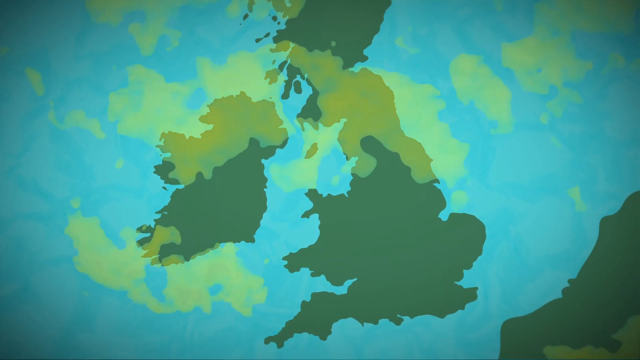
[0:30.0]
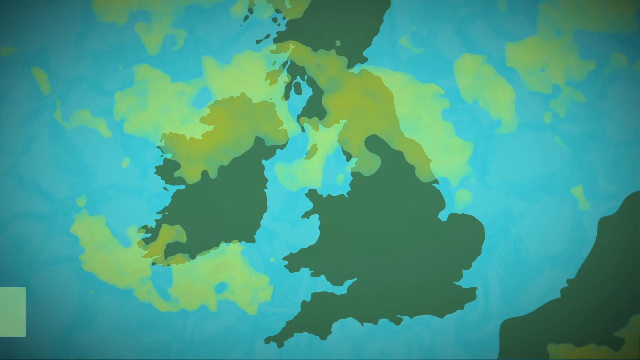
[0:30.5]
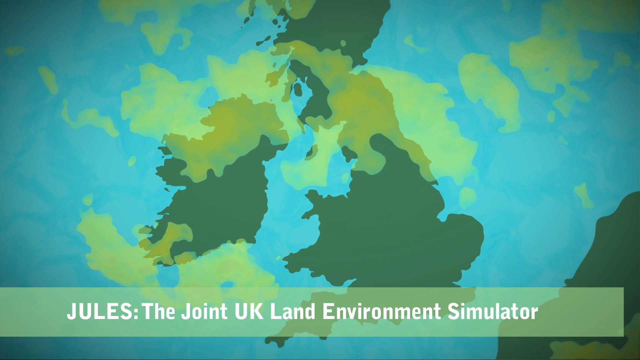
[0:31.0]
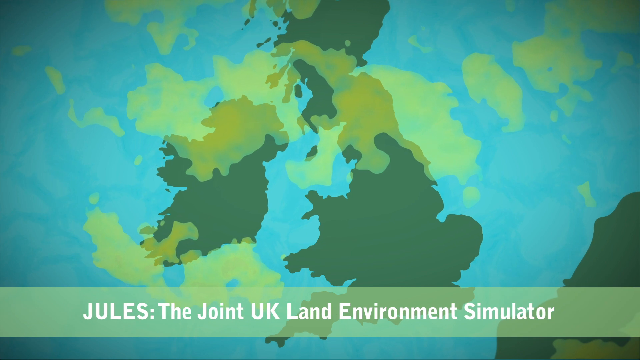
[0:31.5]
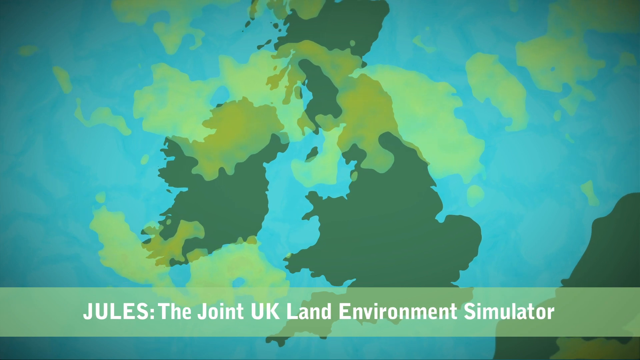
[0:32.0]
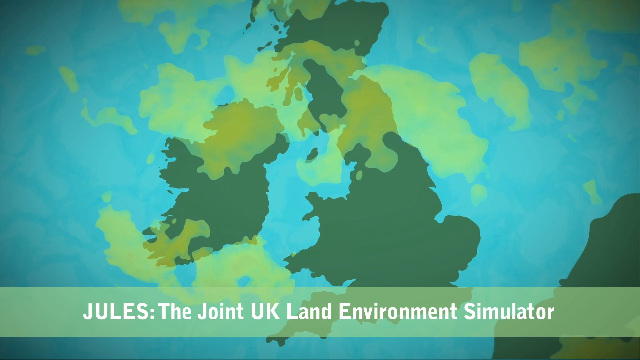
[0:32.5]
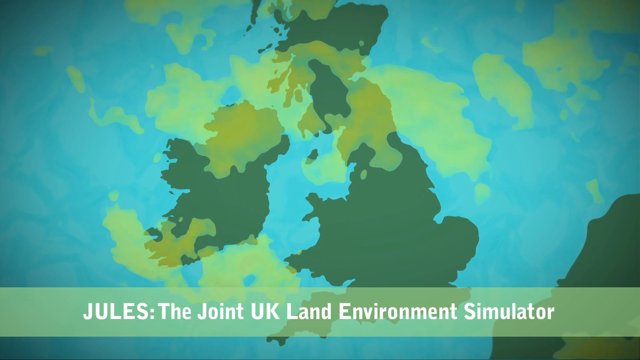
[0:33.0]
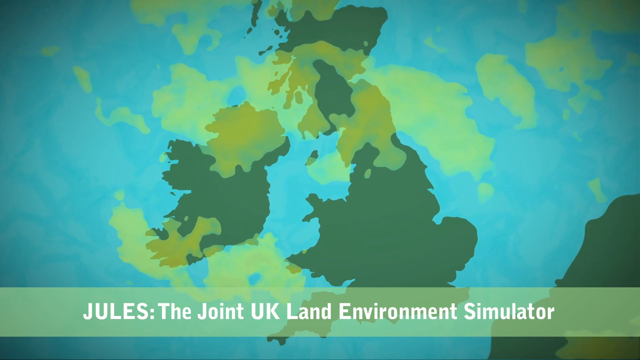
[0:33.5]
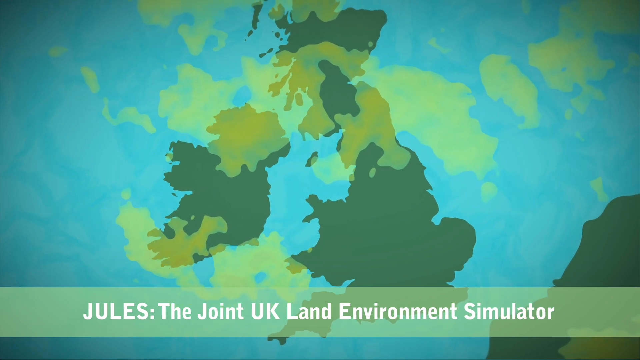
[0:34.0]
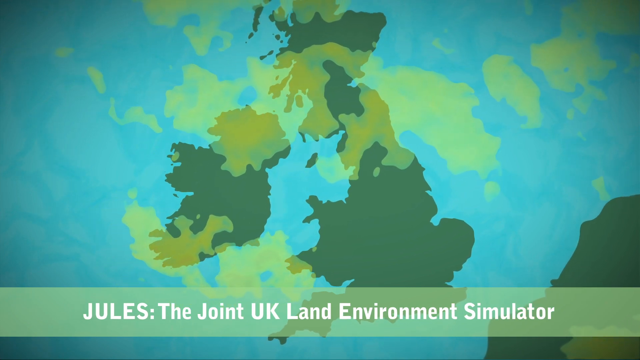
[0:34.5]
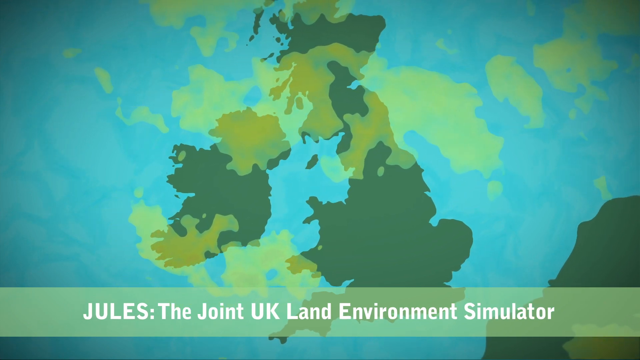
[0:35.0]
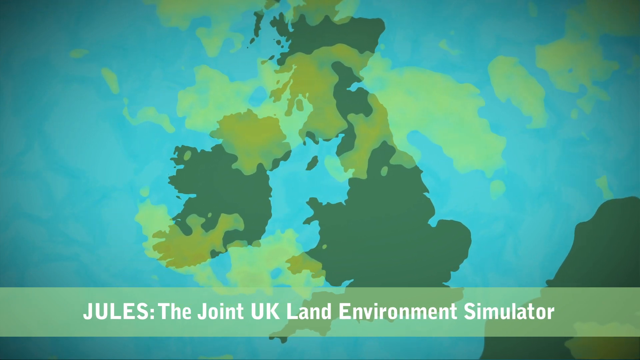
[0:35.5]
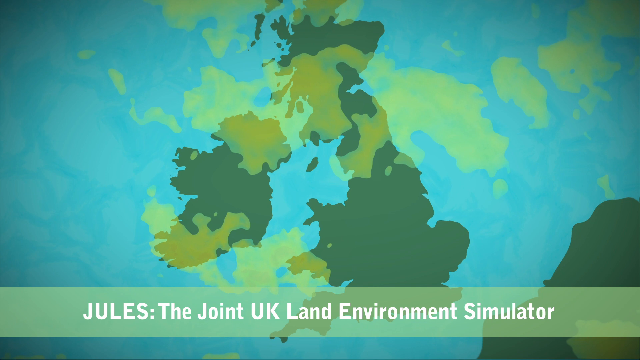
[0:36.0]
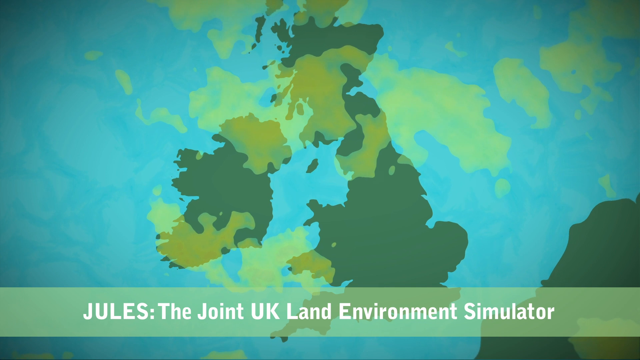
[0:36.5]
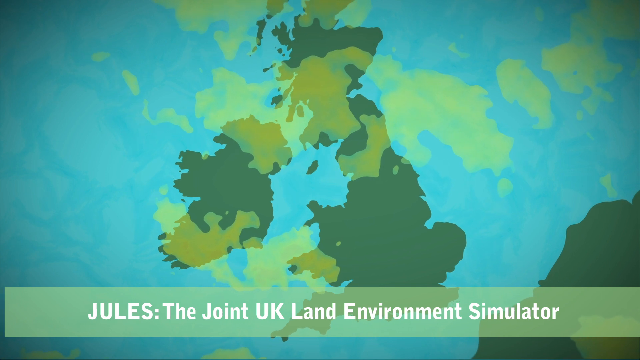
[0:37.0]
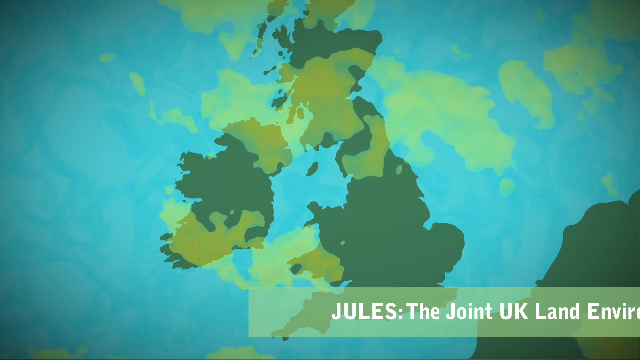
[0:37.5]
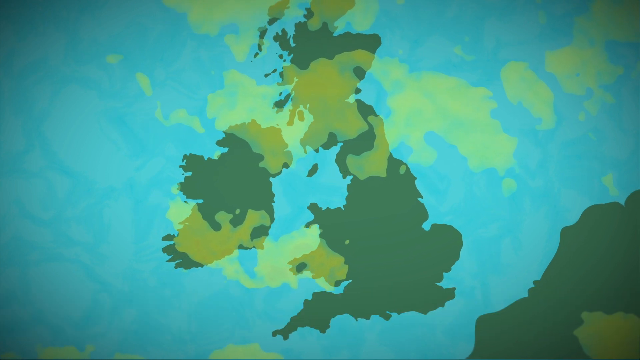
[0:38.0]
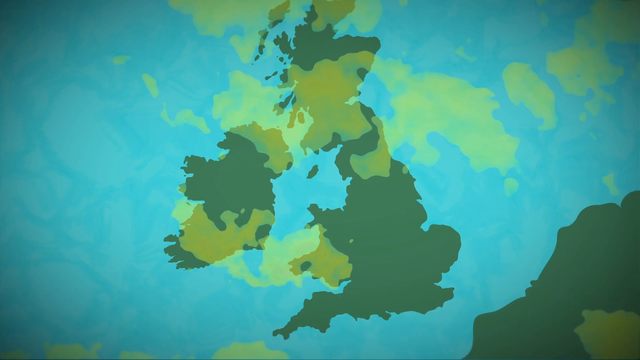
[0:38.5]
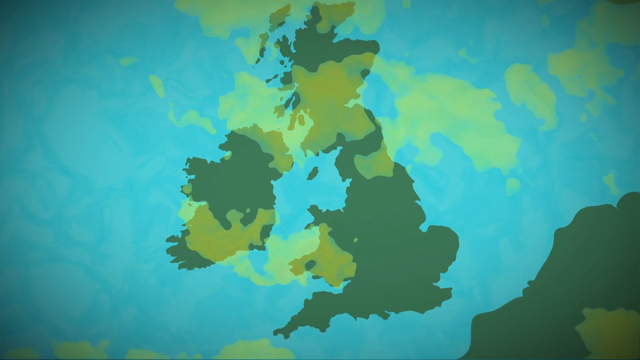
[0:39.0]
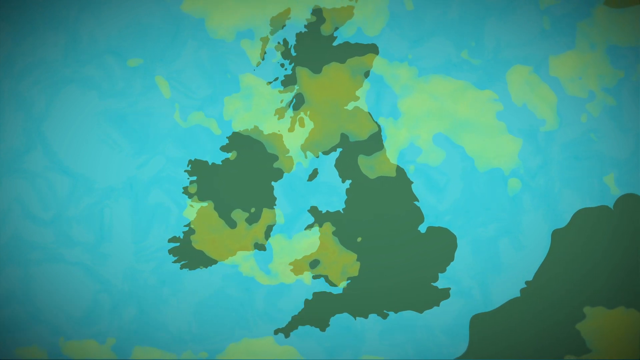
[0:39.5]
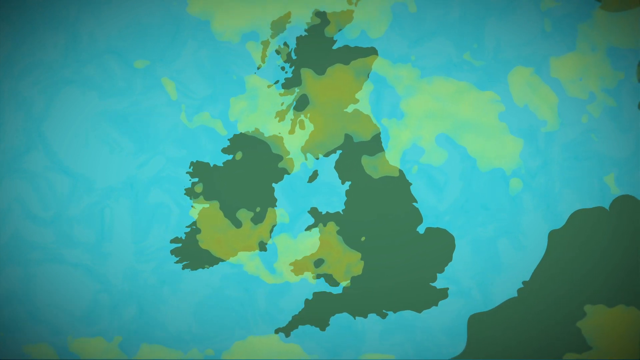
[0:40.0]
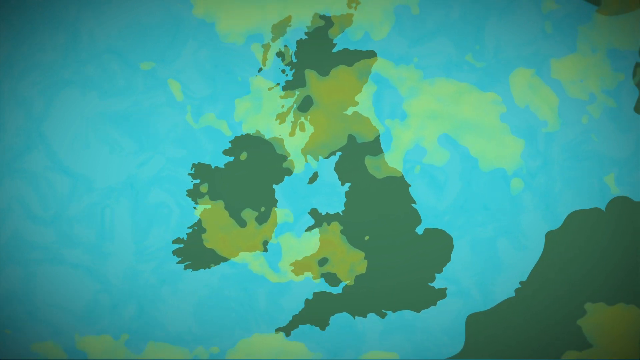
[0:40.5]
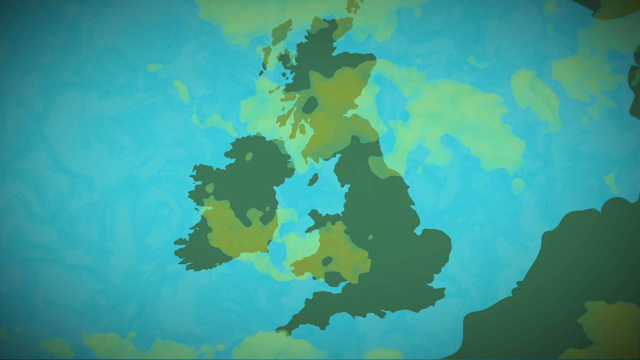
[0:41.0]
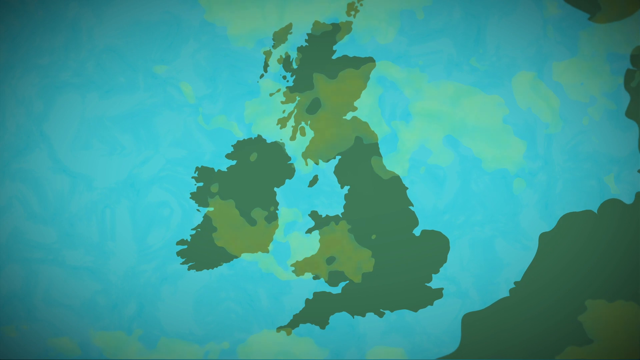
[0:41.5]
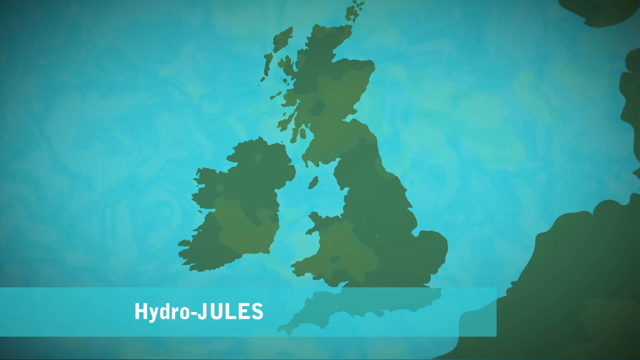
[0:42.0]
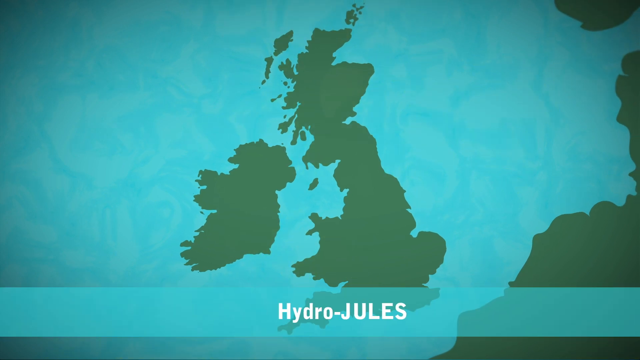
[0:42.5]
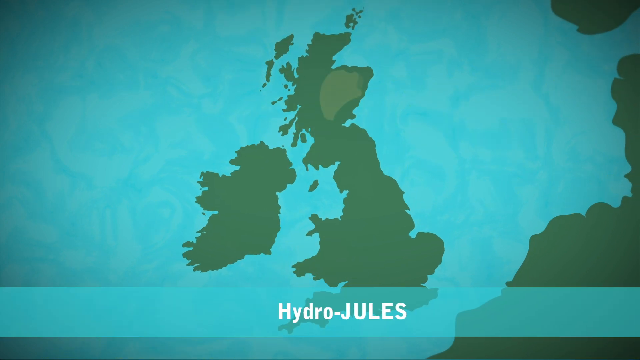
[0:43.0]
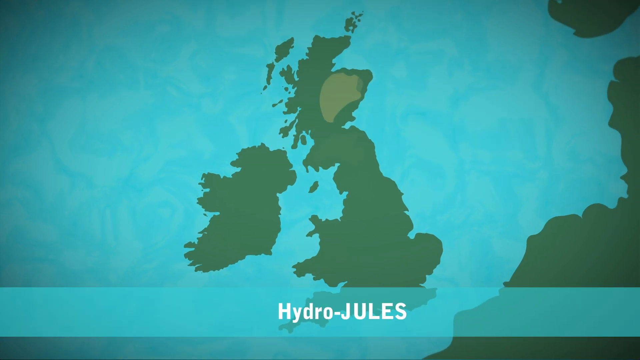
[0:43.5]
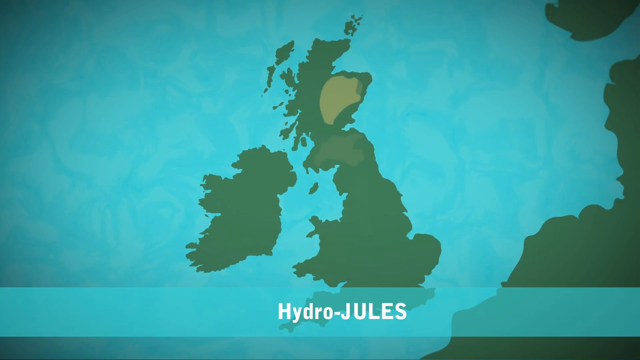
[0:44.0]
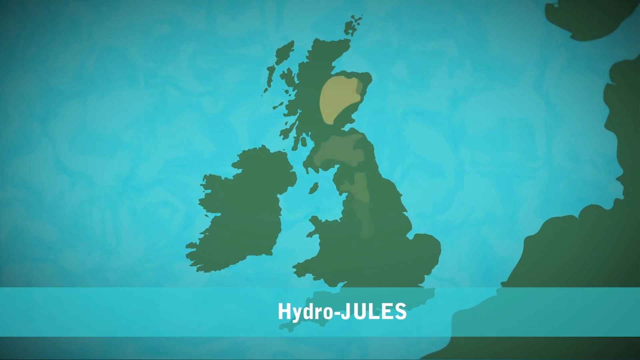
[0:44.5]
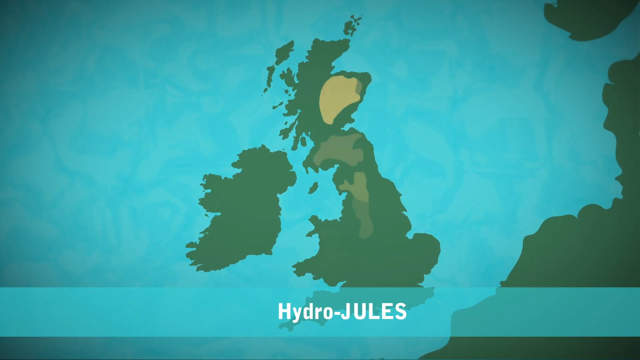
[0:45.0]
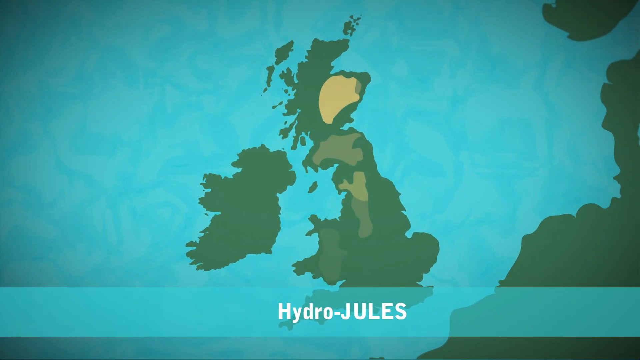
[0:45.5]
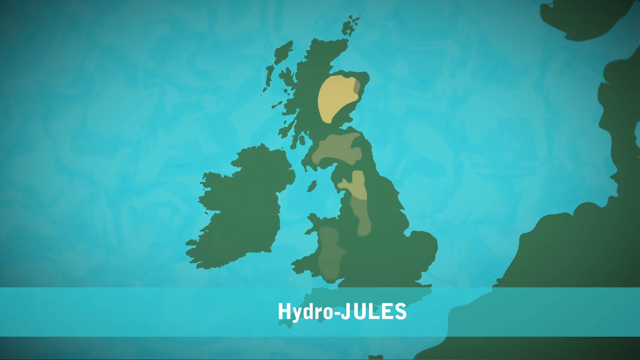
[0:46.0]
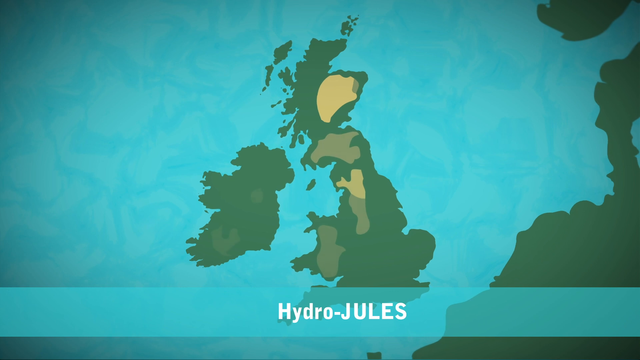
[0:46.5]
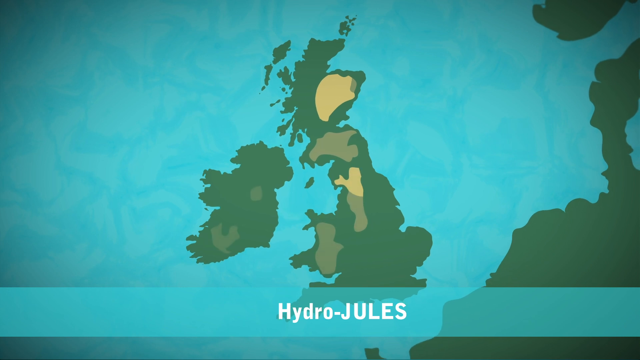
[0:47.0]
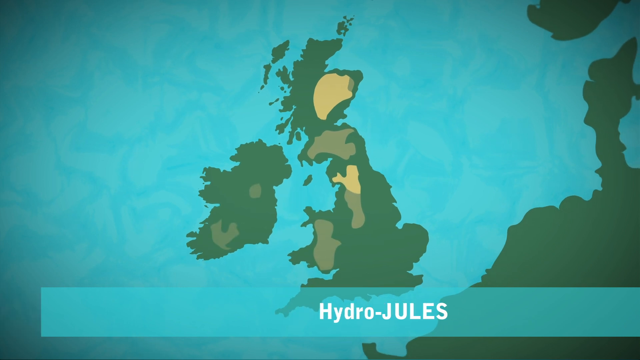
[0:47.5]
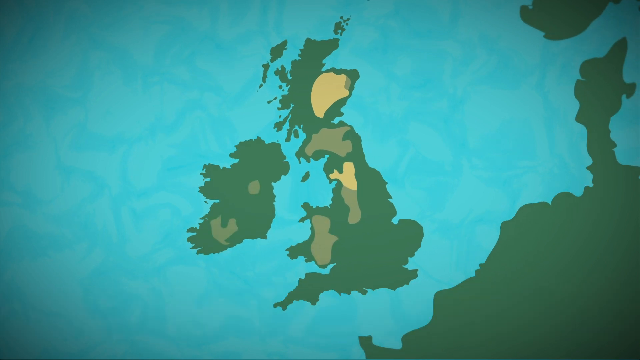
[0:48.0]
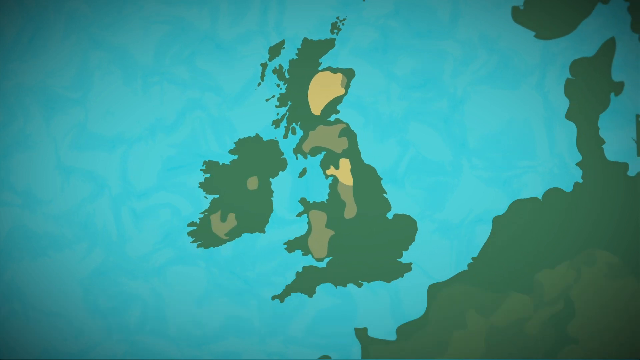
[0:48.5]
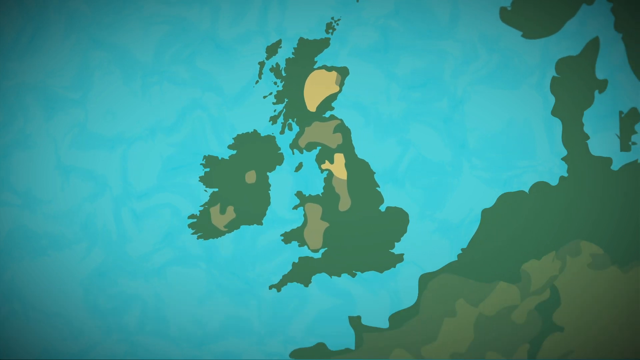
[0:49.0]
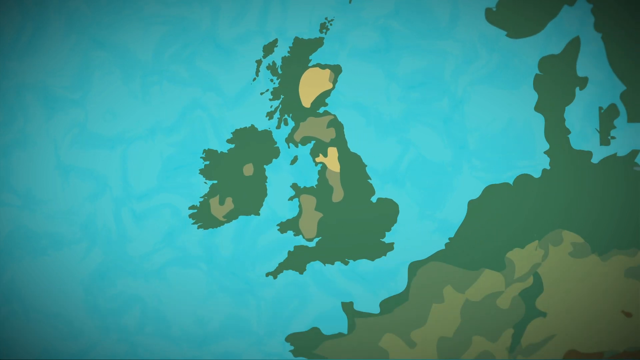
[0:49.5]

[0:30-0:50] A cartoon-style map shows the UK, with blue water and green land. Various yellowish shapes float over the scene, some over the water and some over the land, not in any particular place. A green banner at the bottom reads "JULES: the Joint UK Land Environmental Simulator". Then a blue banner at the bottom of the screen reads "Hydro-JULES". The view appears to pull back, and small yellow shapes appear on the different islands of the UK; these are relatively large yellow shapes. As the view pulls back further, similar big yellow shapes appear over the land in other countries.